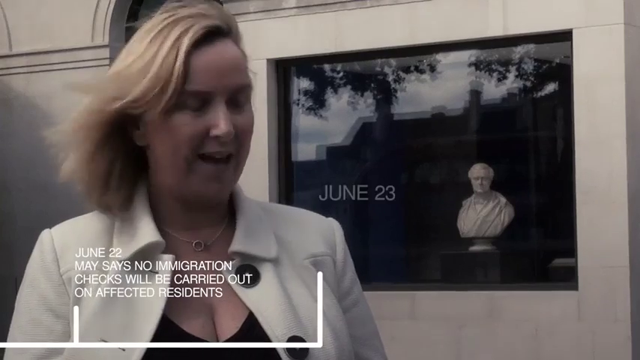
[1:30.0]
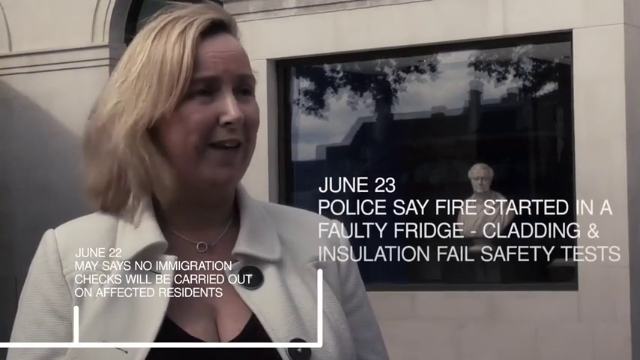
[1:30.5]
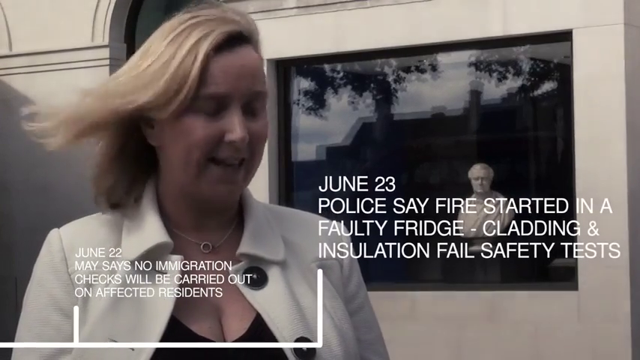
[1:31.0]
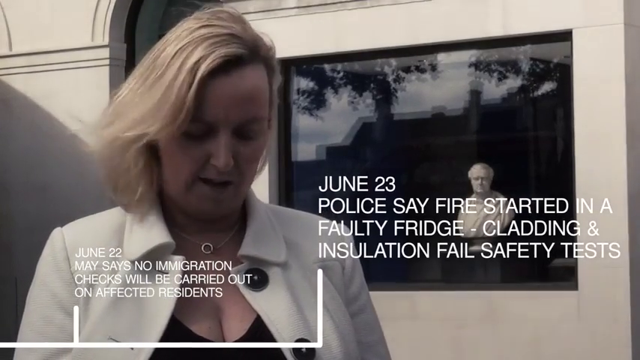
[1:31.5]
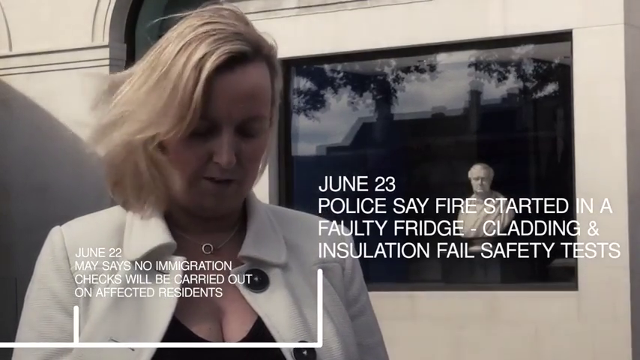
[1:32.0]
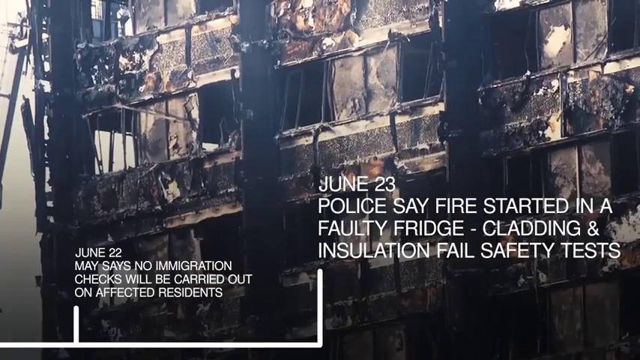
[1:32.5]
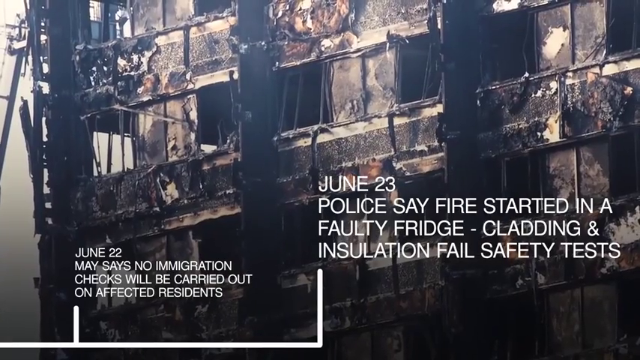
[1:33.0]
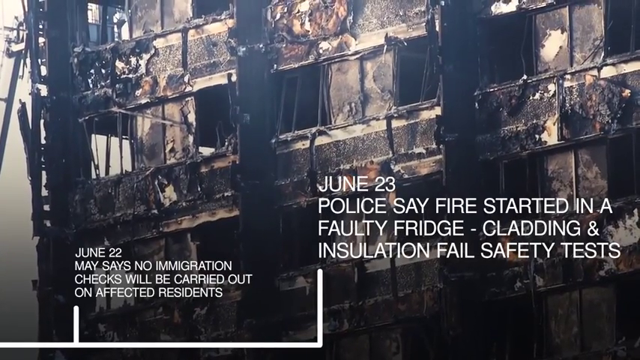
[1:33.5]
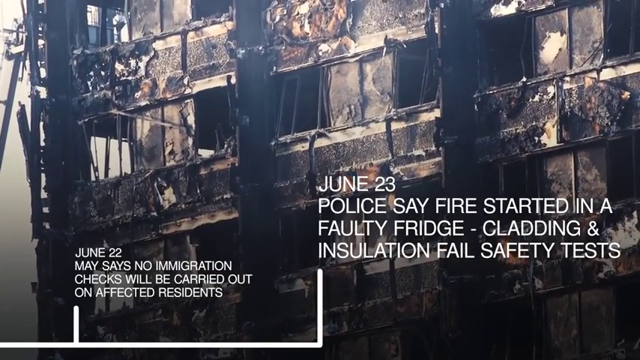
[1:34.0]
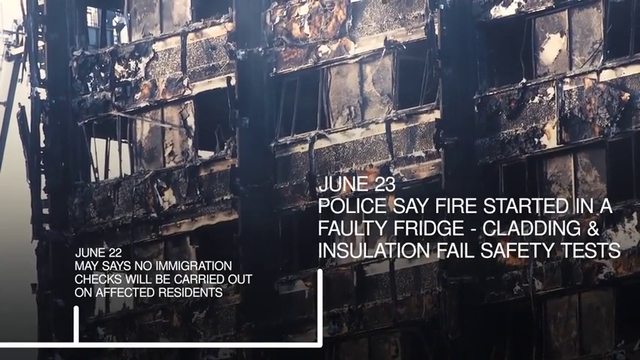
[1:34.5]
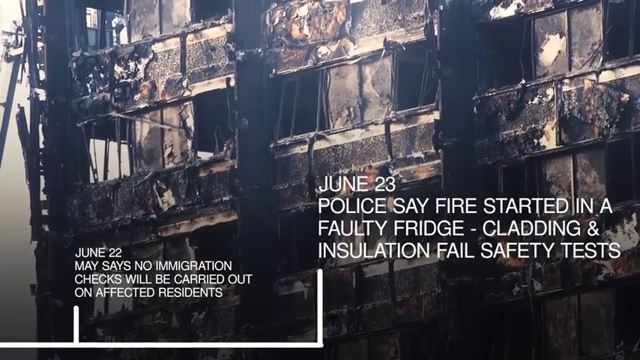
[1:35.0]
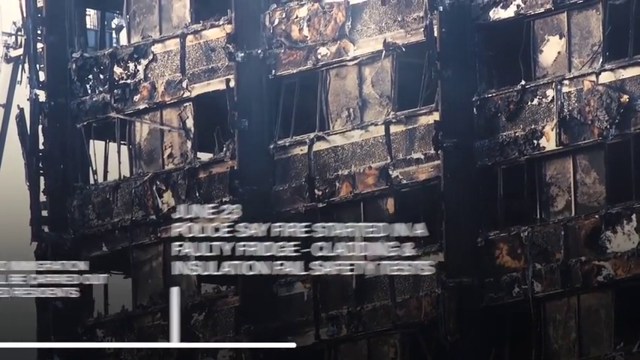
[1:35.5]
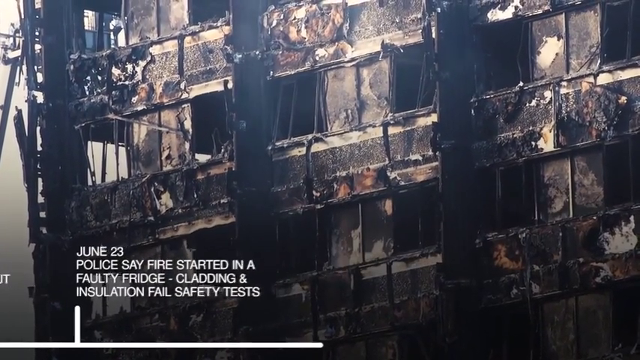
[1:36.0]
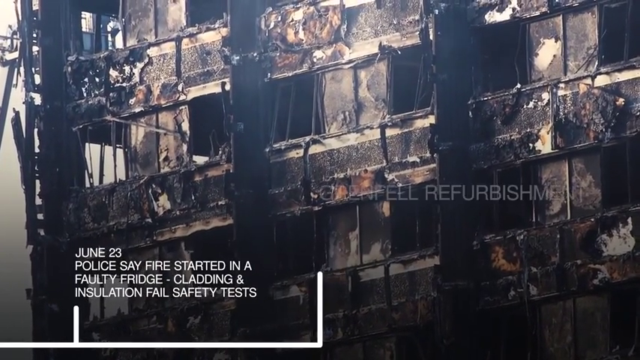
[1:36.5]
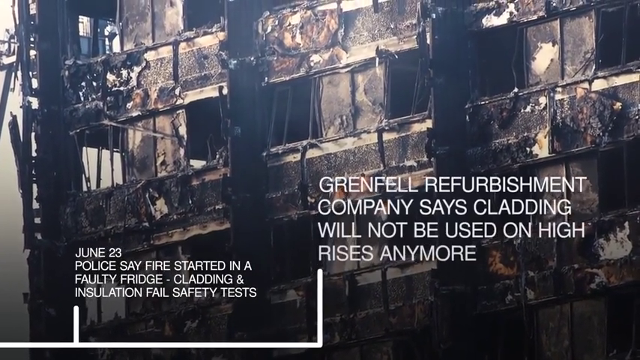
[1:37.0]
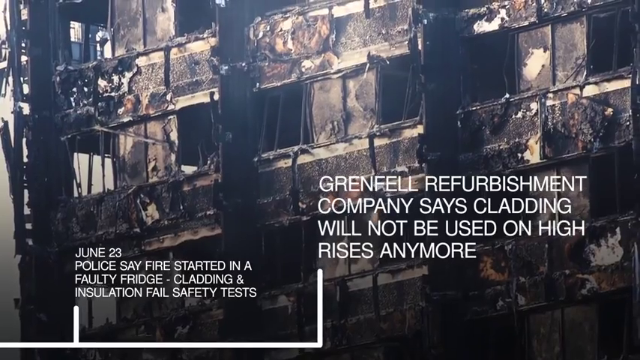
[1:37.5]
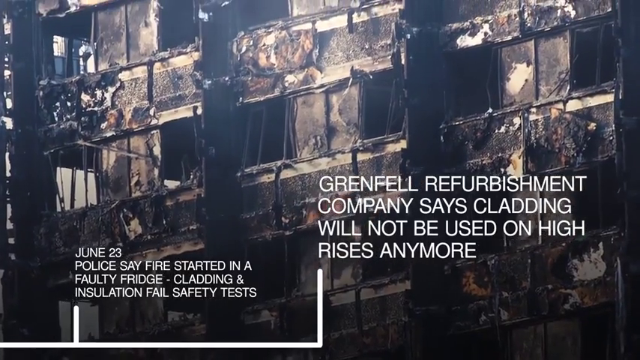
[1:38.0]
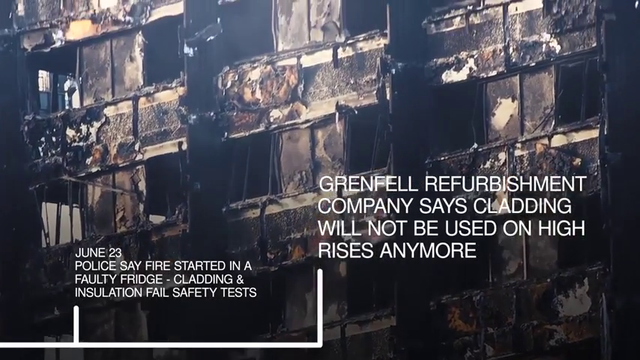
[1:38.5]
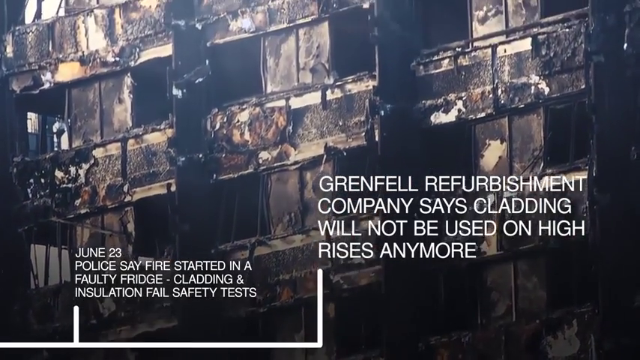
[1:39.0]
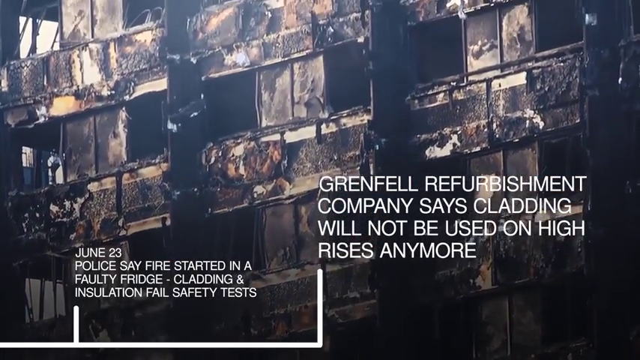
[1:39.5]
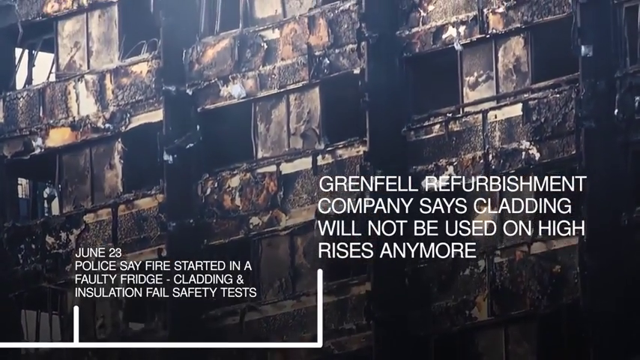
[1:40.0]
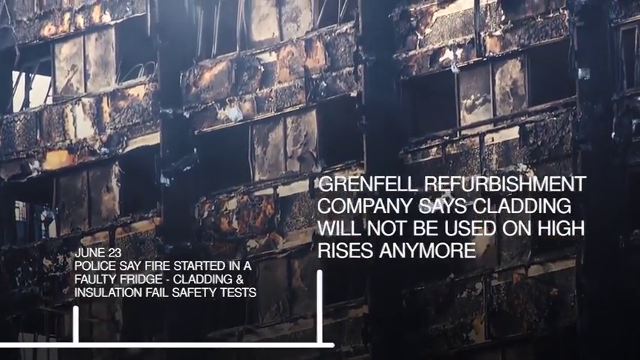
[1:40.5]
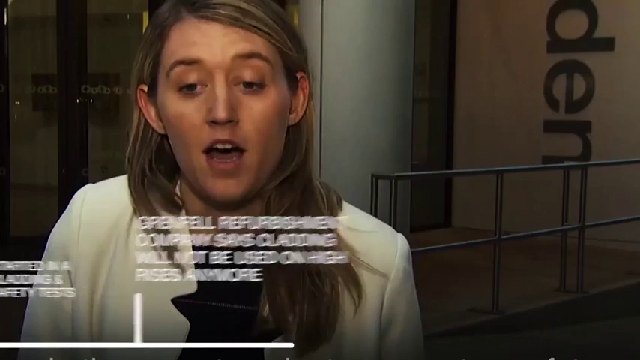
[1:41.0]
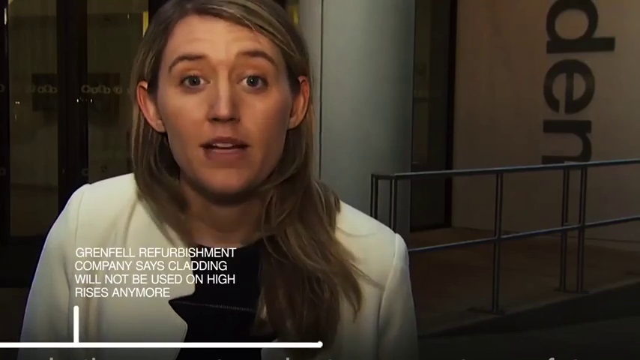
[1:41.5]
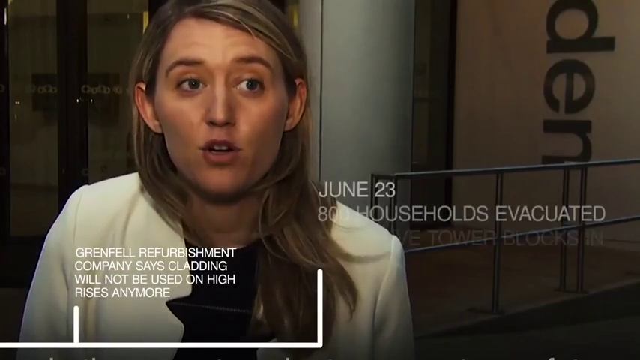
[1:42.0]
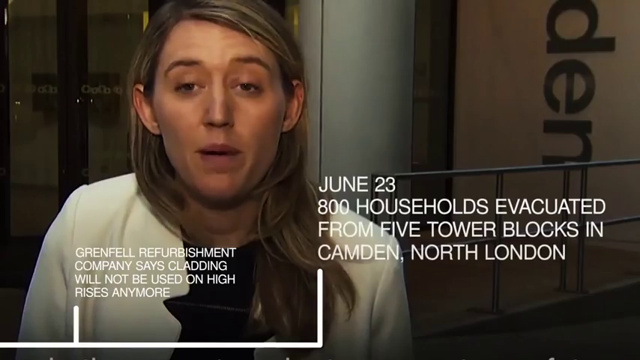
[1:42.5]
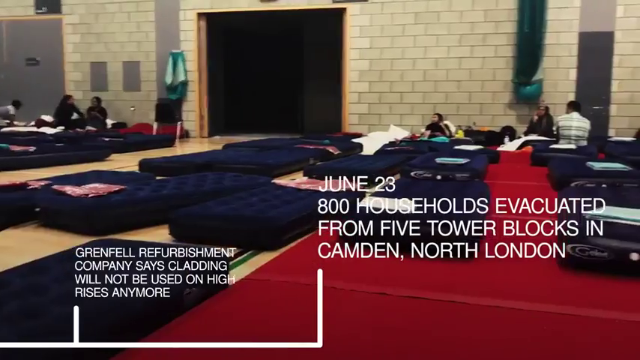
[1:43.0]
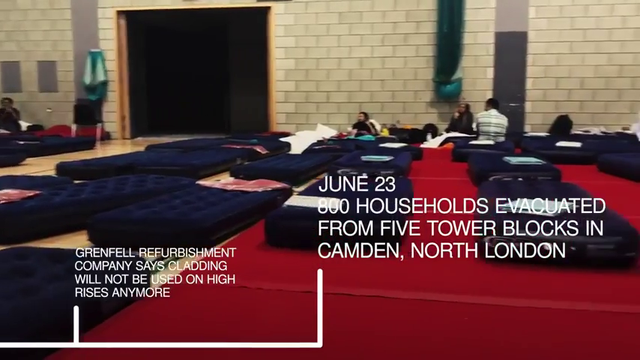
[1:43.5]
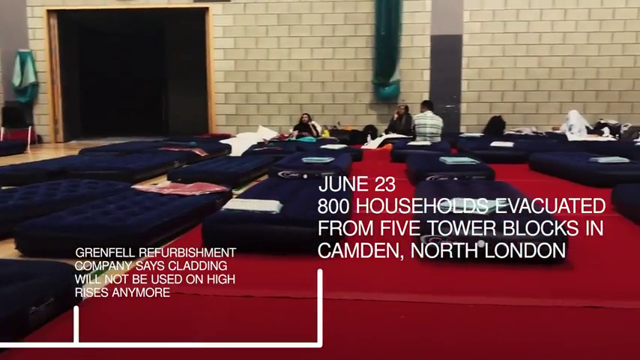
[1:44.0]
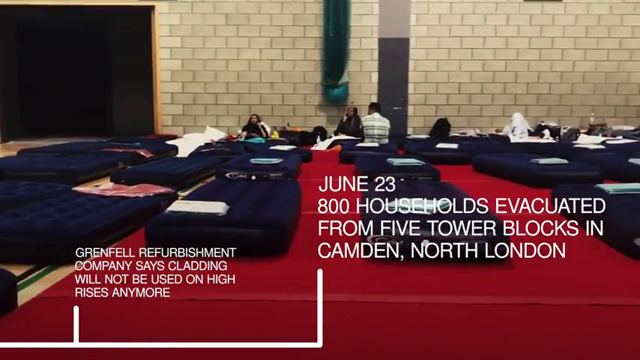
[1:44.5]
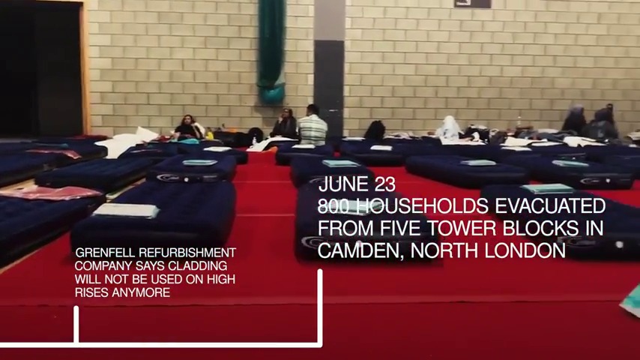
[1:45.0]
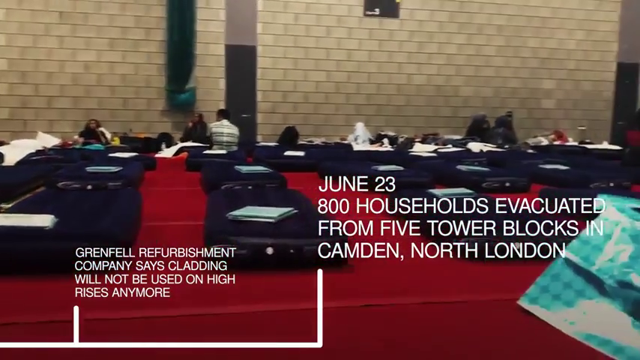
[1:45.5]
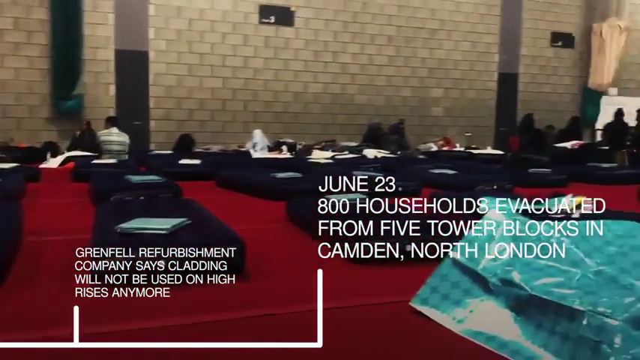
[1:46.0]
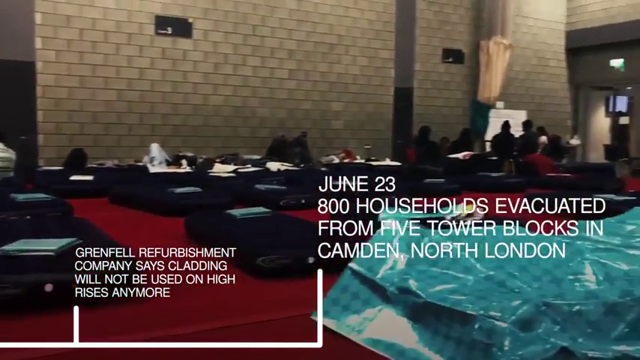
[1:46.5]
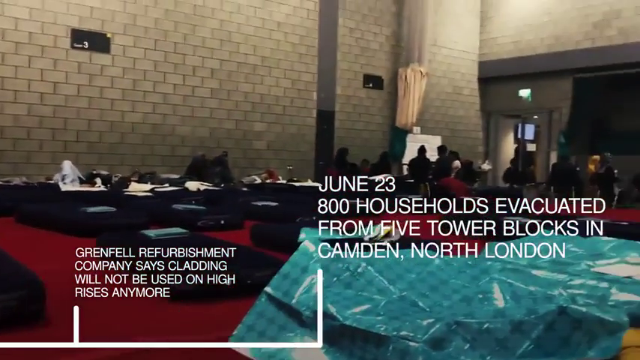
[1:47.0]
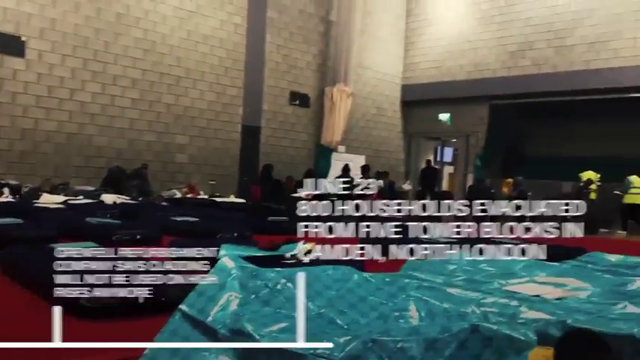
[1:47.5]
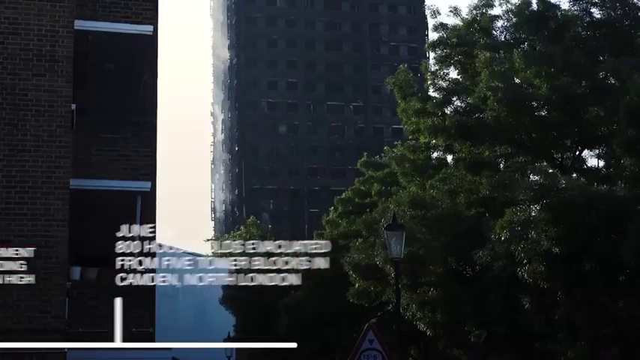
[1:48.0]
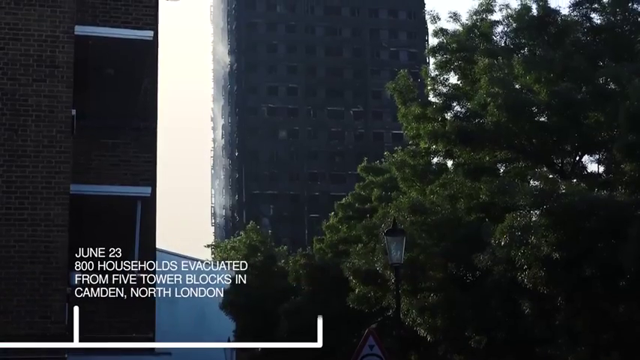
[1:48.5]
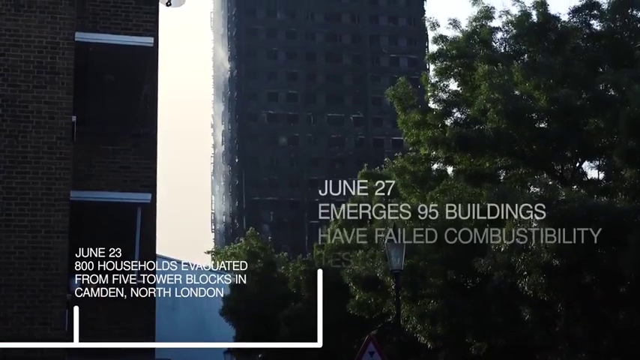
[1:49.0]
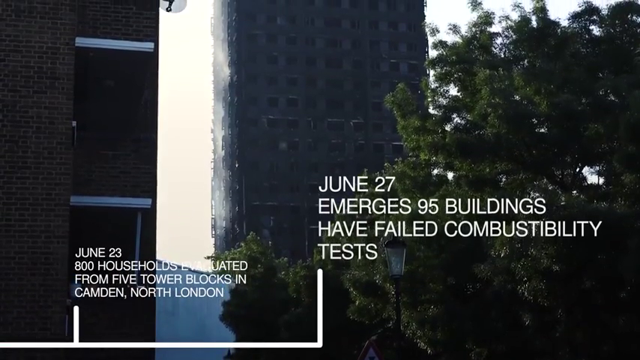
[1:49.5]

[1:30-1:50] Text reads "June 23rd, police say fire started in a faulty" fridge. A woman is speaking while looking down, her hair waving, with what appears to be a burned-down building in the background as the camera pans slightly. The text at the center moves down to the left and shrinks. A line comes up from the bottom, with text saying cladding "will not be used on high-rises anymore." The text goes down to the left, smaller, and a line comes up from the bottom again. Text appears at the center: "June 23rd, 800 households evacuated from five tower blocks in Camden, North London." A transition changes to bedding inside a building, with brick walls, red carpet and blue beds, as the camera moves over to the right. The text goes down to the left, and a large high-rise building and trees appear. Text at the center reads "June 27th" and "buildings have failed combustibility tests."